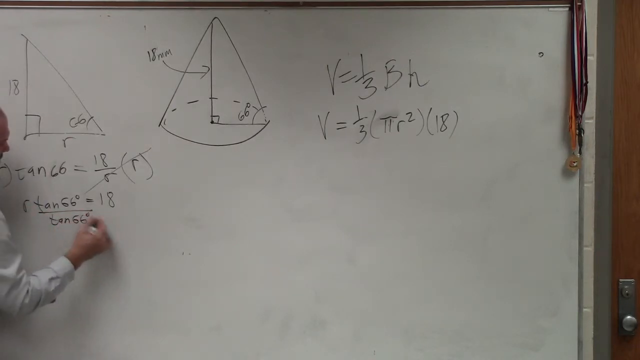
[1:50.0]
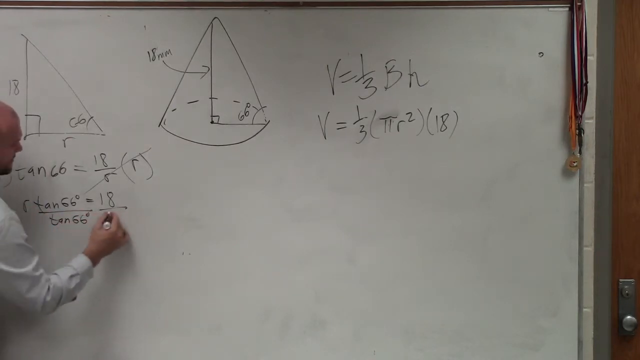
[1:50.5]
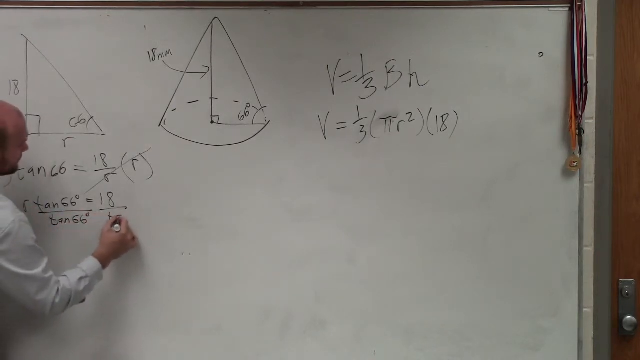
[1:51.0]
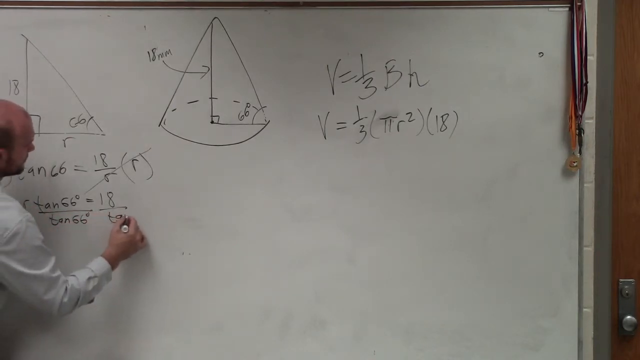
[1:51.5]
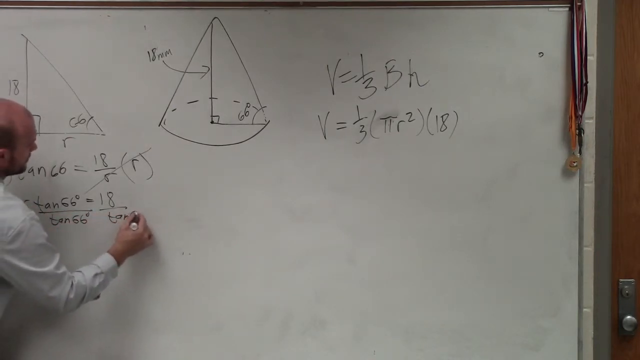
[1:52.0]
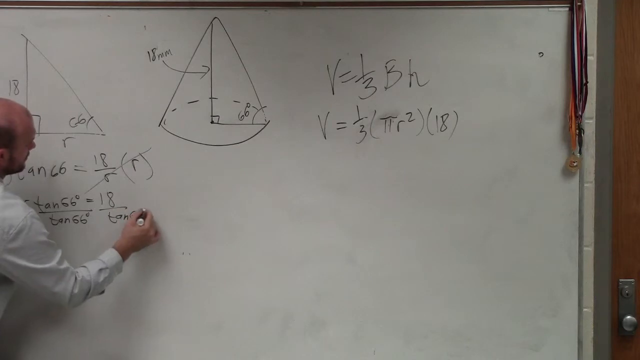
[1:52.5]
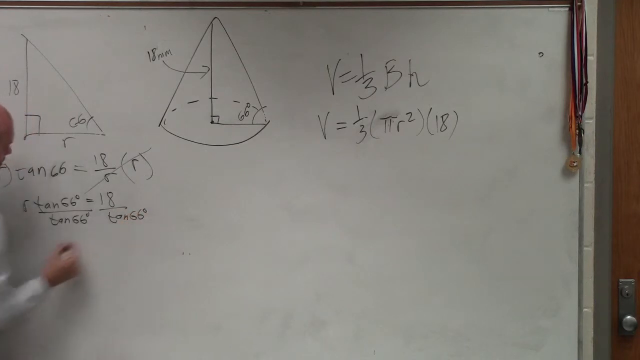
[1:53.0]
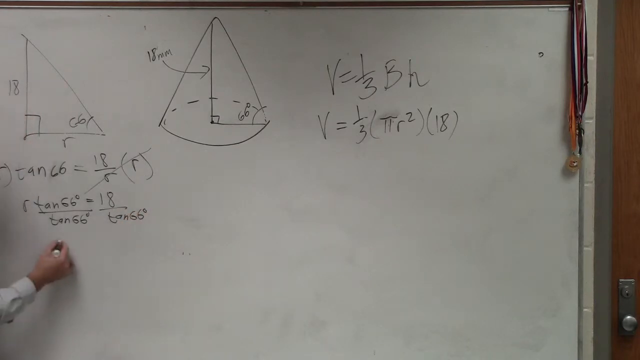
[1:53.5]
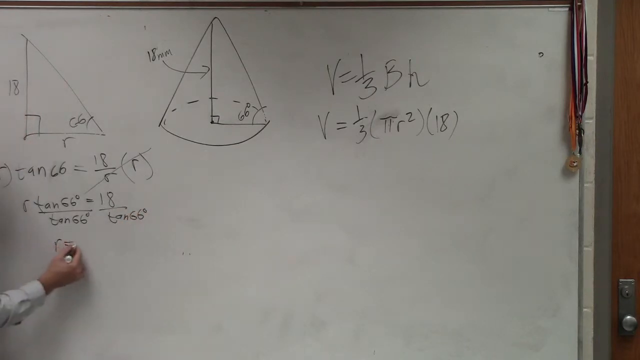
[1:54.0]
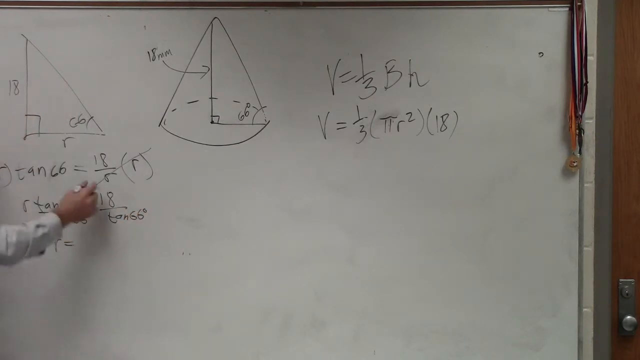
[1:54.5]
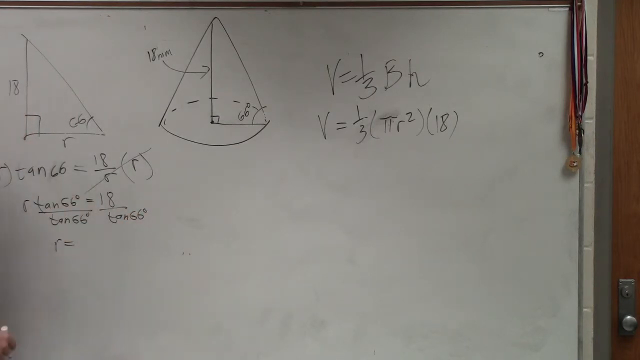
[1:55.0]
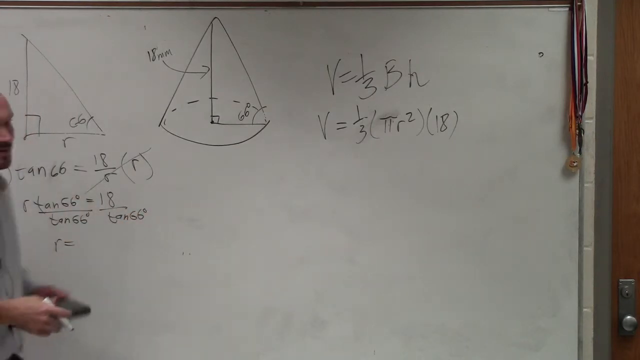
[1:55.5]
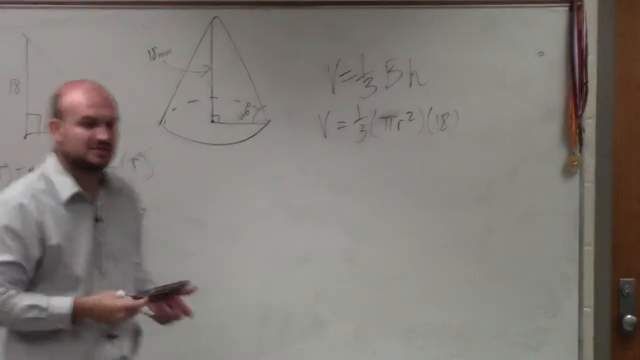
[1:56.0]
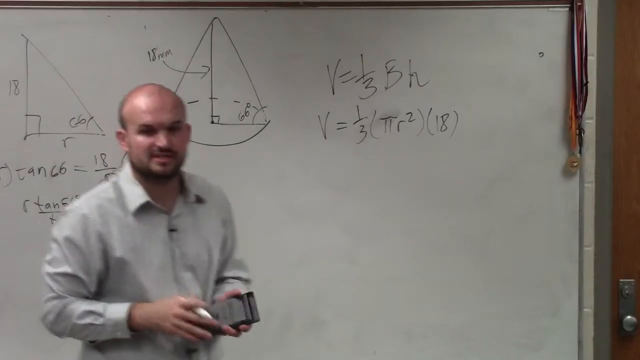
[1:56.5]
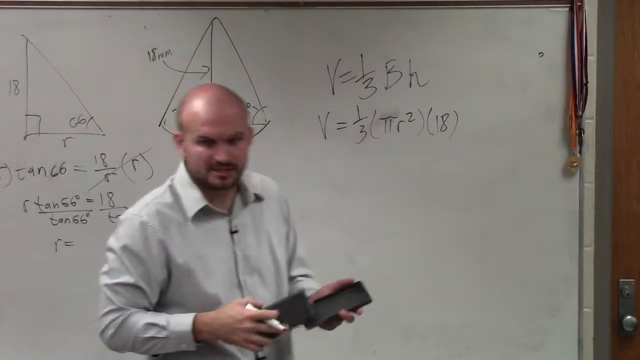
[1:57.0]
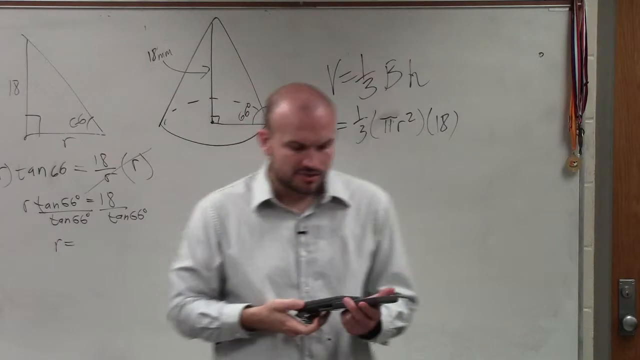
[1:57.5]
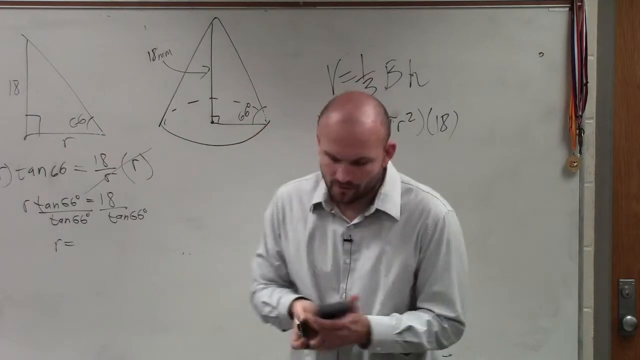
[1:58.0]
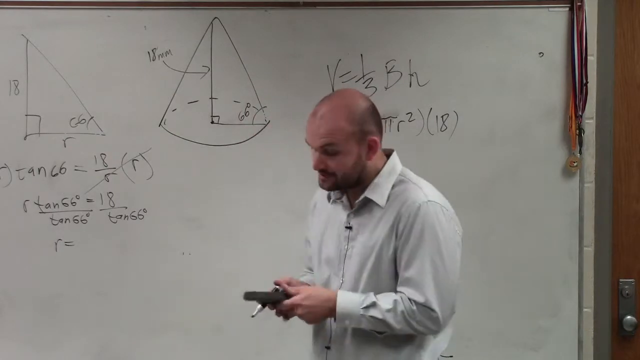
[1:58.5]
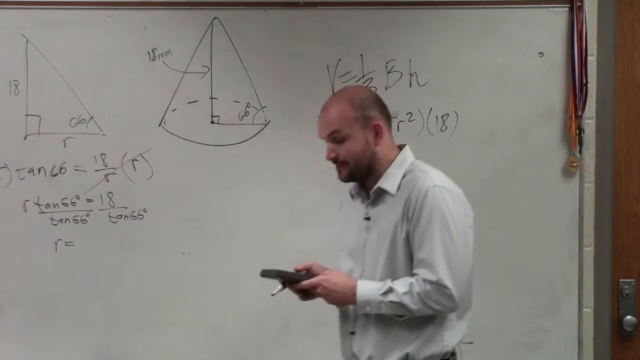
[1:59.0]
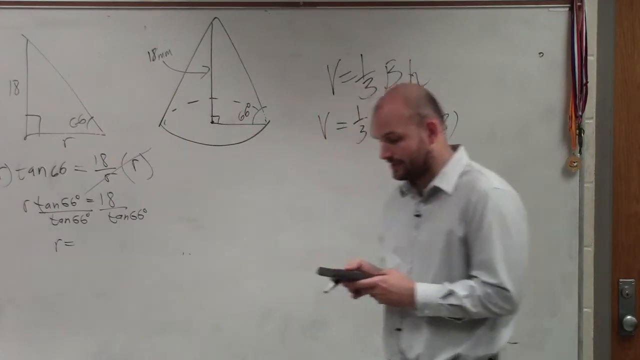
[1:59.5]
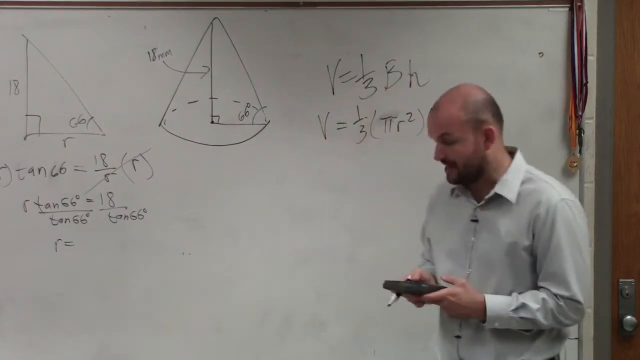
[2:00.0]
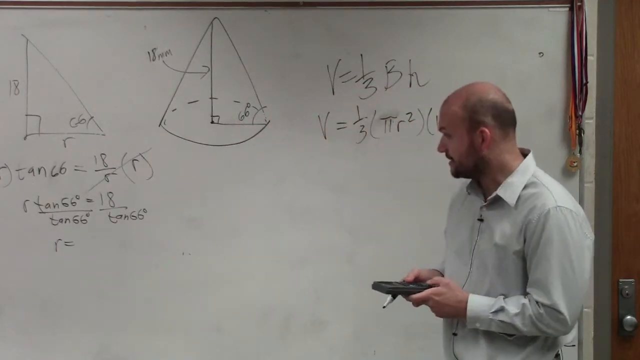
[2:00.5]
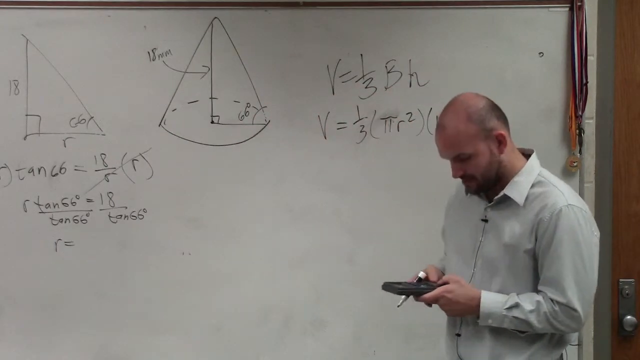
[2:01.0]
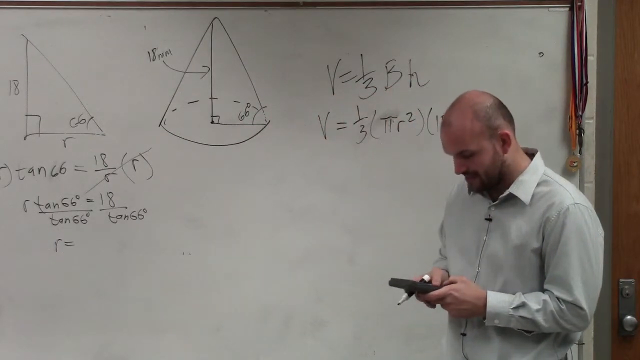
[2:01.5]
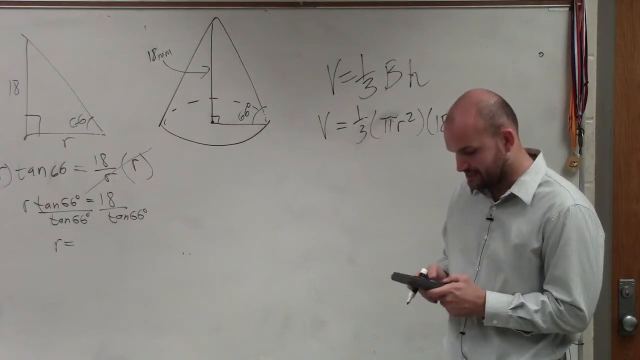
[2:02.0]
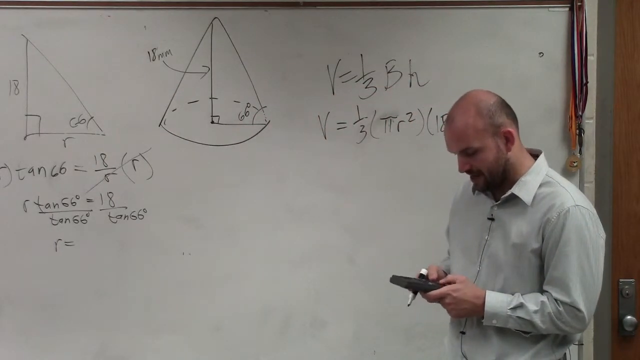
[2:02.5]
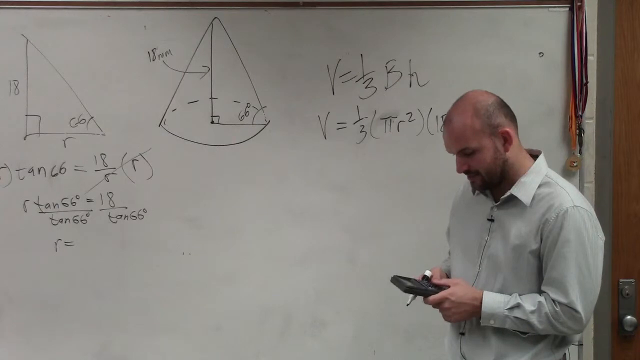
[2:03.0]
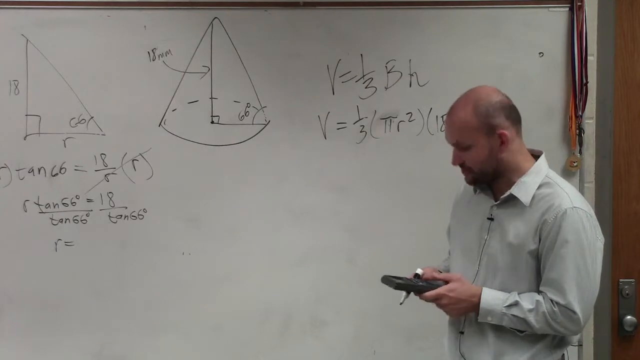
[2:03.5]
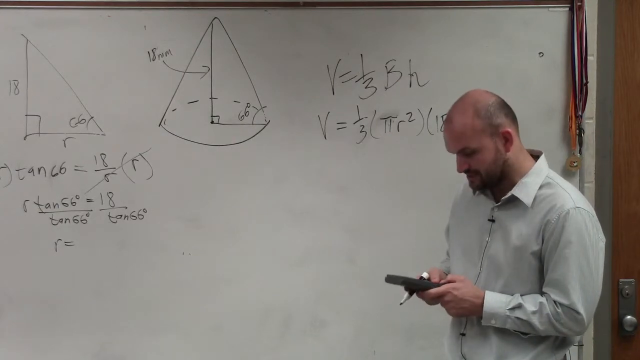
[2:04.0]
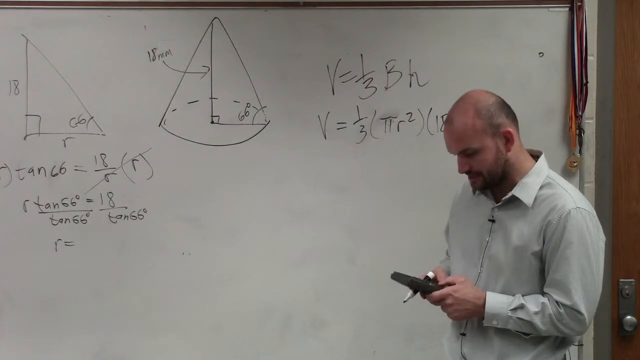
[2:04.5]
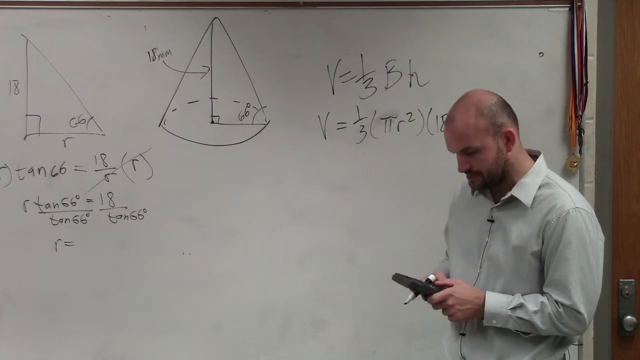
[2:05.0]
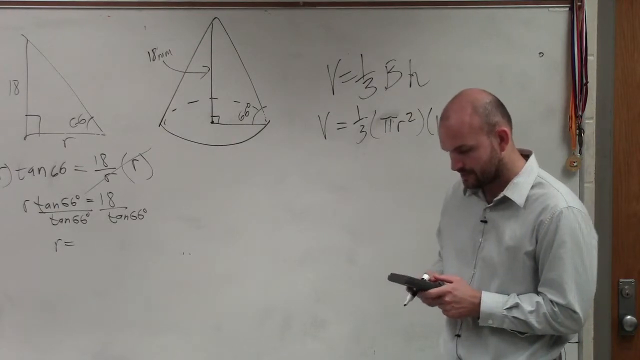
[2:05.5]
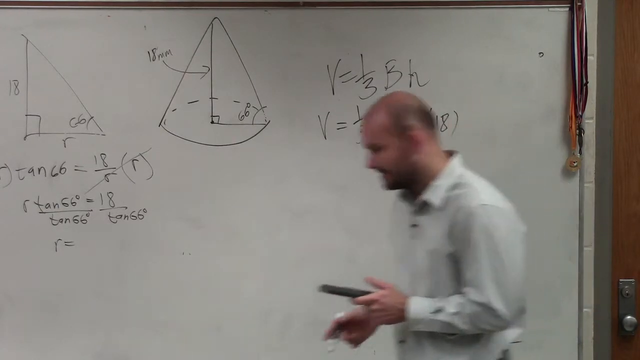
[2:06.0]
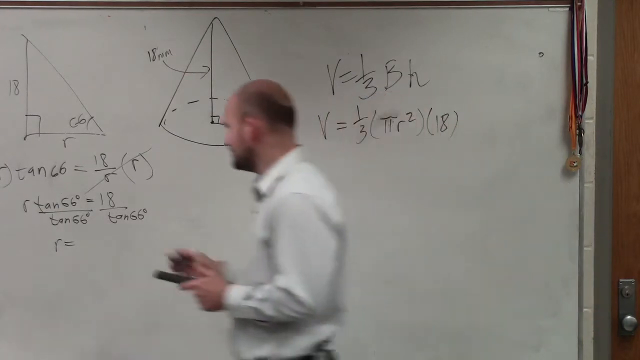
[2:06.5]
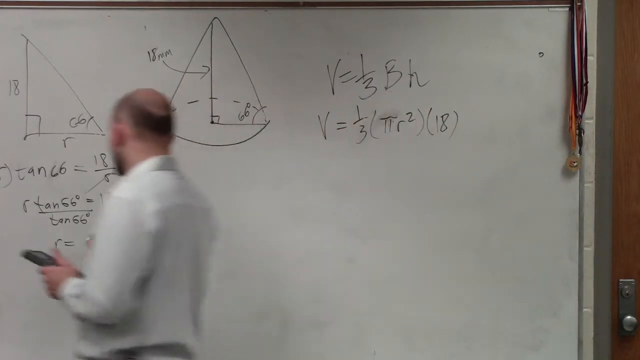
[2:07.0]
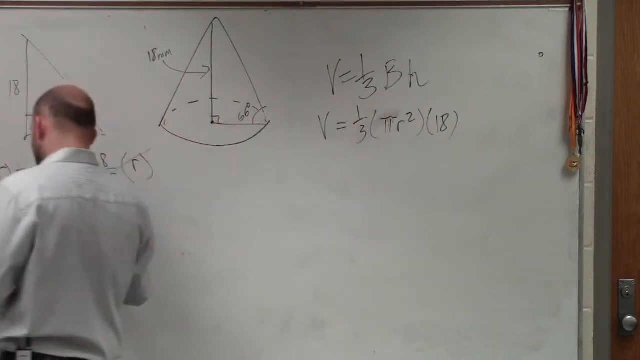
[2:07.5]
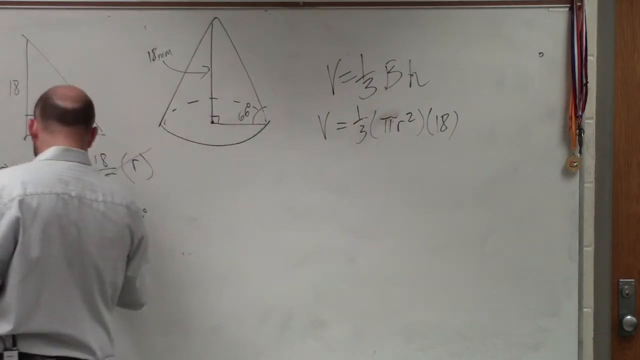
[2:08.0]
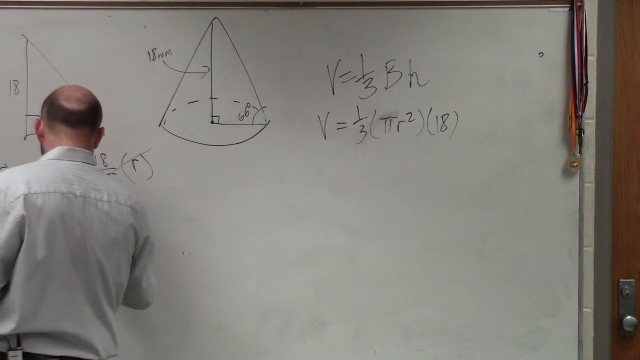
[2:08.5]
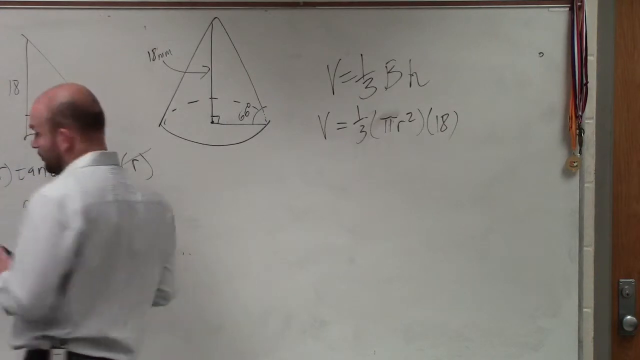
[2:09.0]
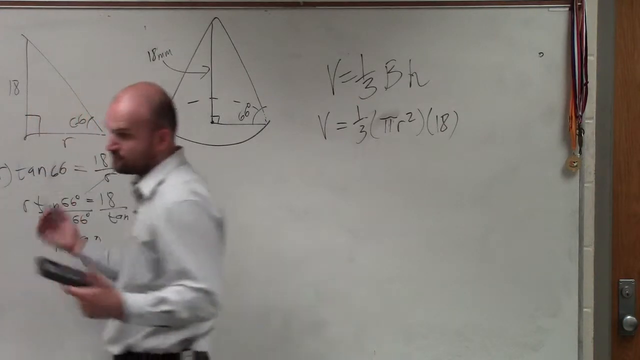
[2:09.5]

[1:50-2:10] Mostly the man's arm and profile are visible. He has written the rest of the equation on the board: R tan 66 degrees over tan 66 degrees equals 18 over tan 66 degrees. He takes a scientific calculator out of his pocket, takes it out of its cover, puts the cover under the calculator and returns to the board, appearing to type in the numbers he has written. Underneath the previous equation he writes R equals. He turns and holds the calculator with both hands, typing mostly with his thumb, while his right hand still holds the black marker. He looks at the calculator and writes what is apparently the solution on the board: R equals 8.0. He is still gesturing, with a lot of eyebrow movement. Everything else on the board stays the same, and the calculator slides into its protective cover in his hands.